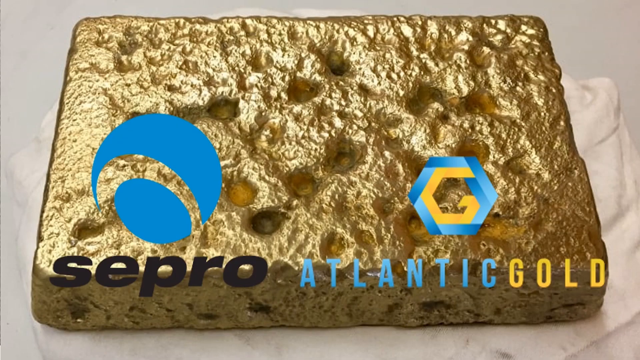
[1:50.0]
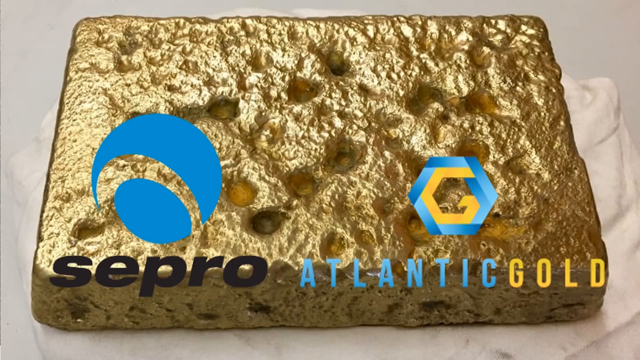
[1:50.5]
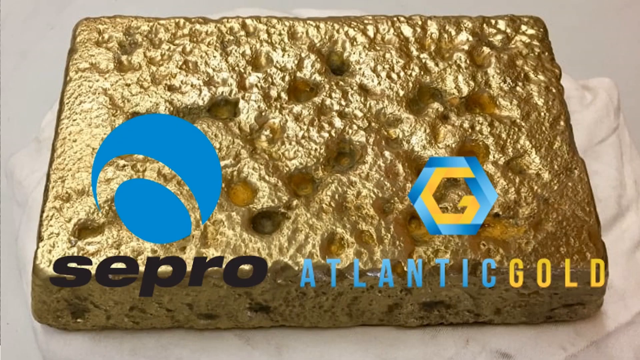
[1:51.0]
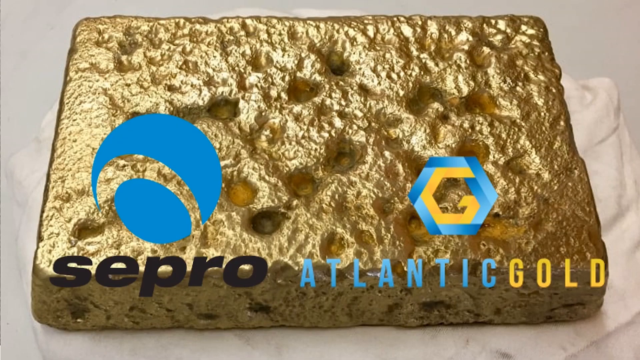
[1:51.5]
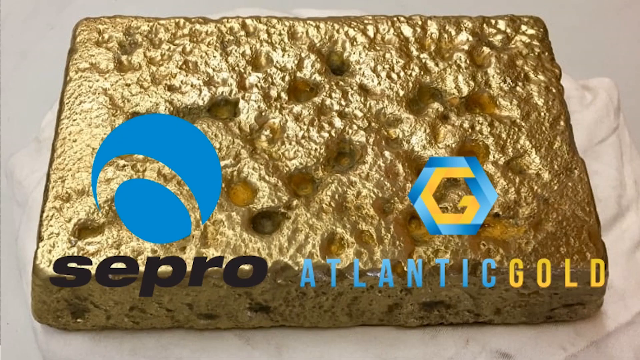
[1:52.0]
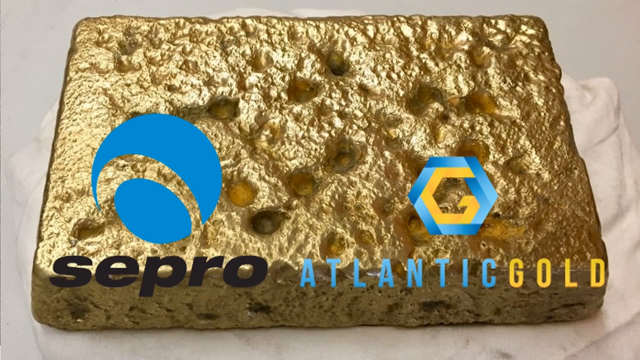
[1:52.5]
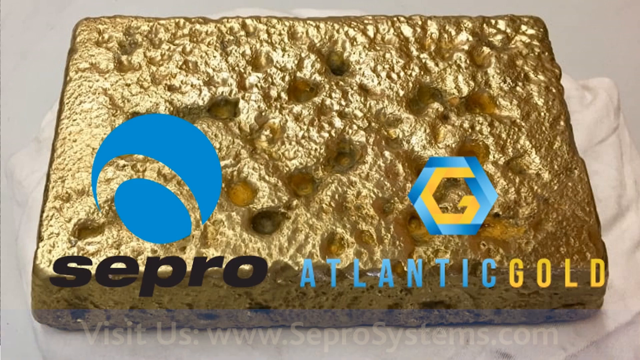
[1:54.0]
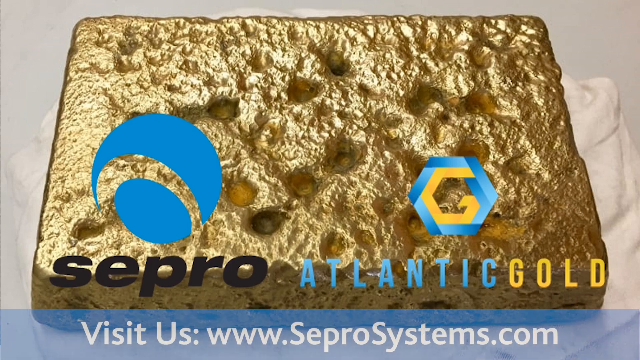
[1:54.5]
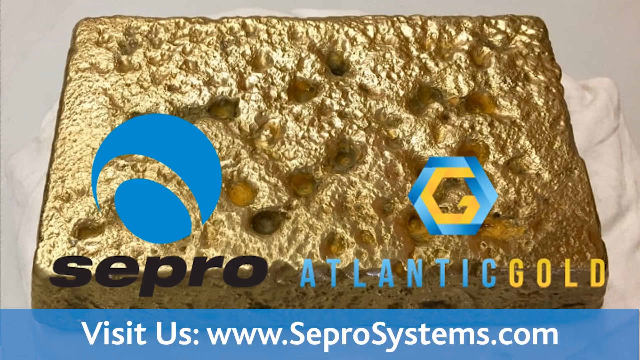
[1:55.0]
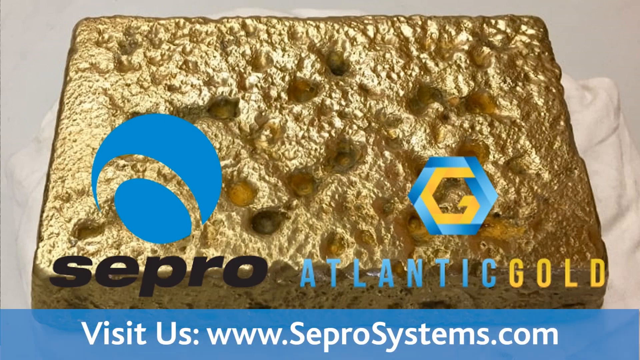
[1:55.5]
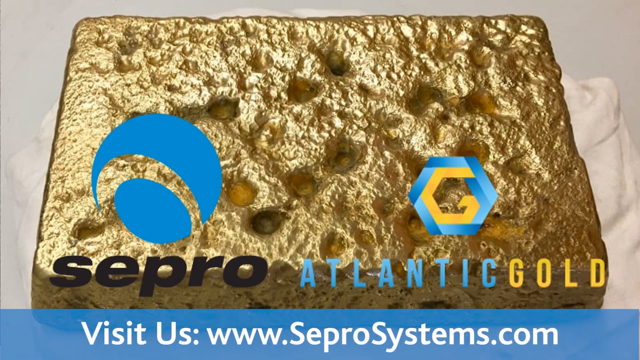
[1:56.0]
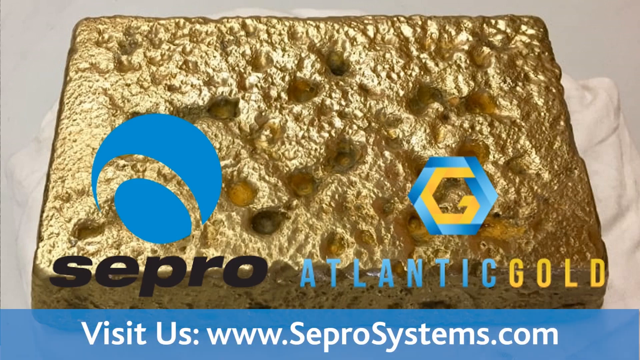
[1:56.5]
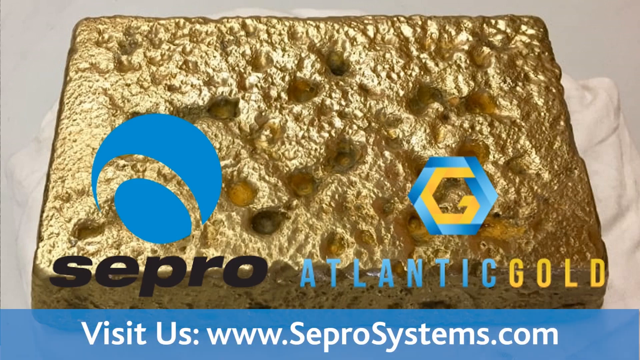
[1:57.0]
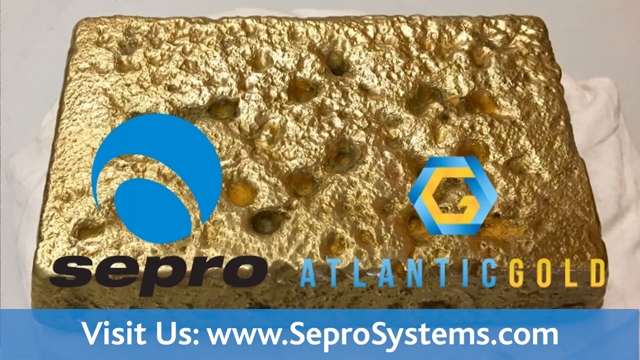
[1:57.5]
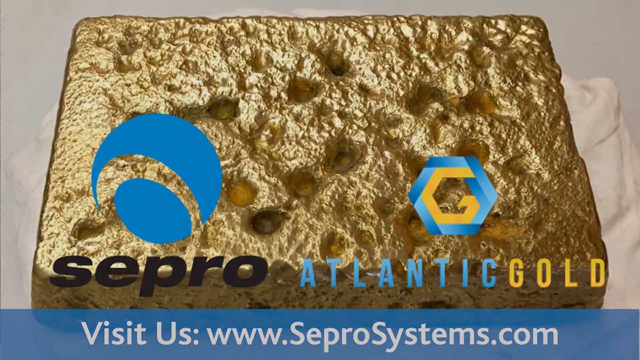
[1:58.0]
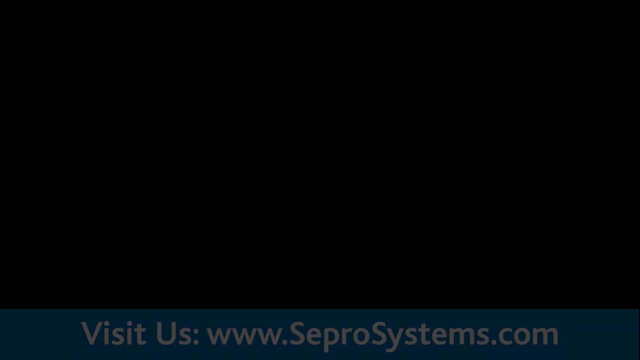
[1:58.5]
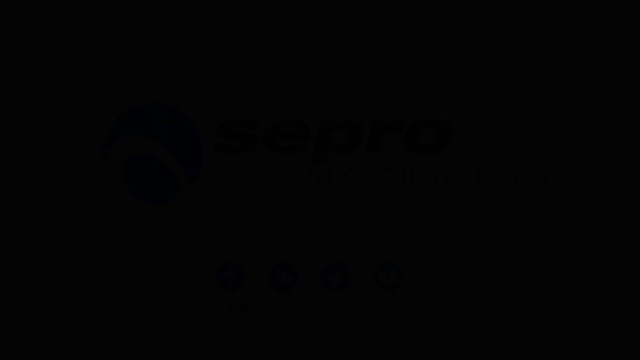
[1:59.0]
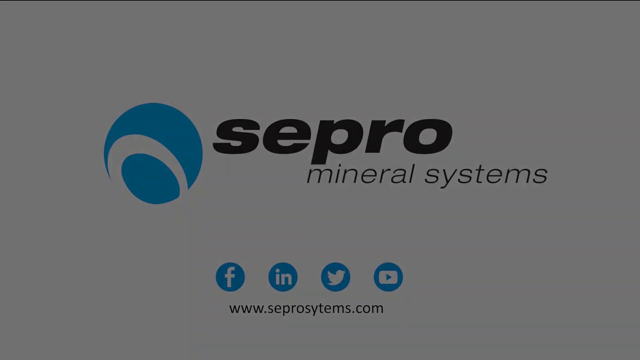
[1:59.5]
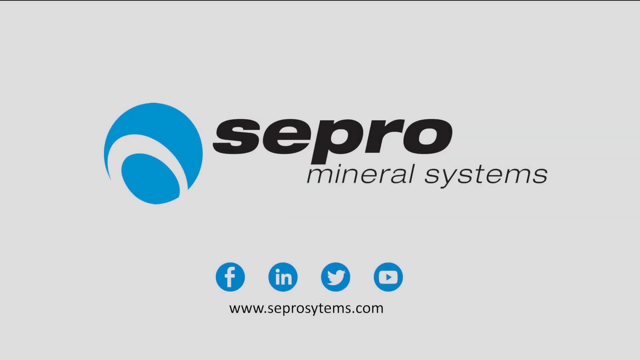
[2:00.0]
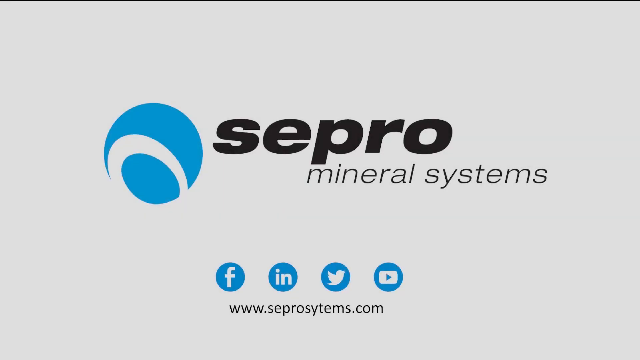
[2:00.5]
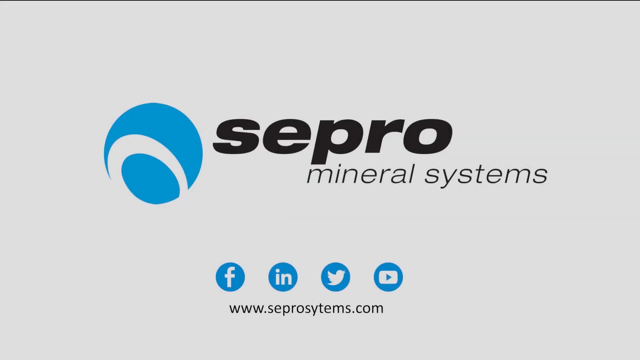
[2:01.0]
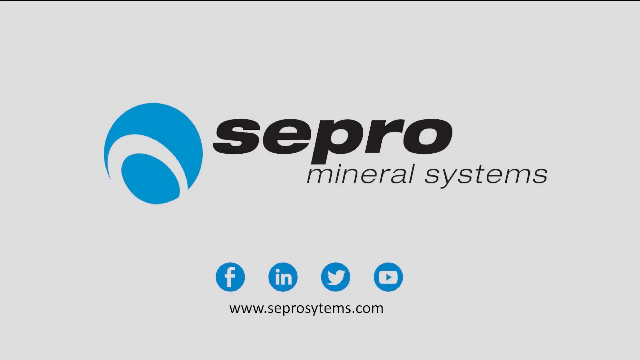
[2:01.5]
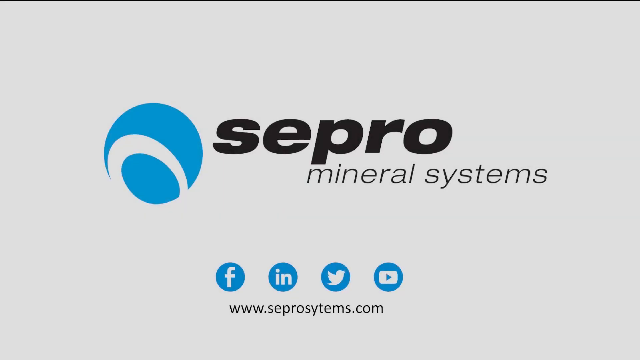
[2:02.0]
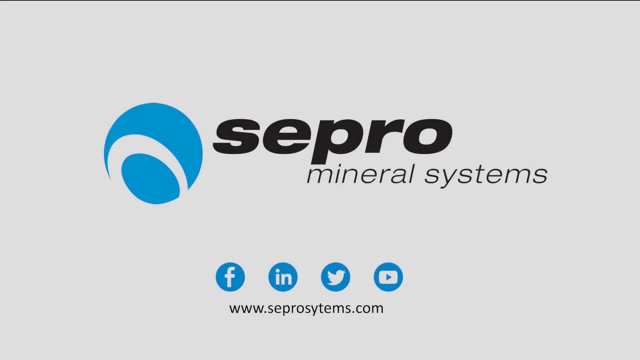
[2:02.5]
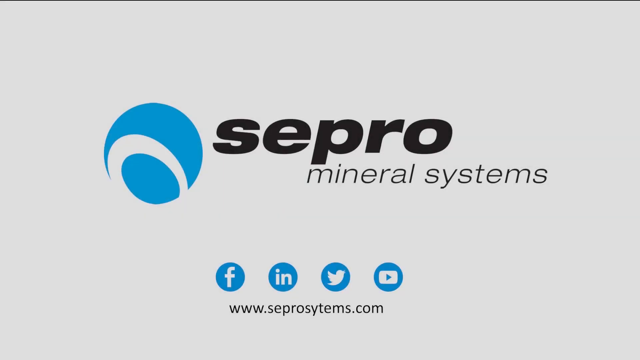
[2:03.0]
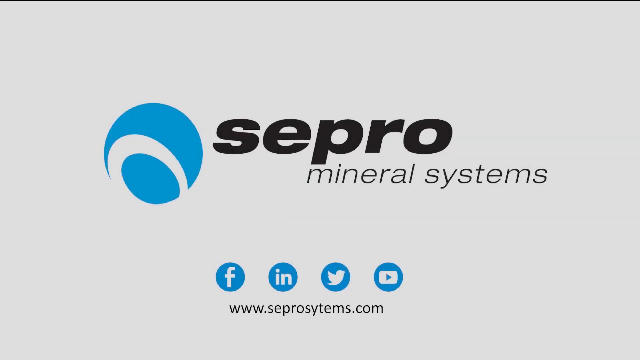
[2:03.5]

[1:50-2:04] A large gold bar with some divots and craters in it is shown. Above it are logos for Sepro, a blue circle with a translucent circle sideways on the bottom, and Atlantic Gold, a hexagon with a concentric G in the center. A website pops up at the bottom of the screen reading "visit us www.seprosystems.com." Then a page appears that says "Sepro Minerals," with four links, "Facebook," "LinkedIn," "Twitter," "YouTube," and "www.seprosystems.com," on a white background with the Sepro Mineral Systems logo in blue to the left.